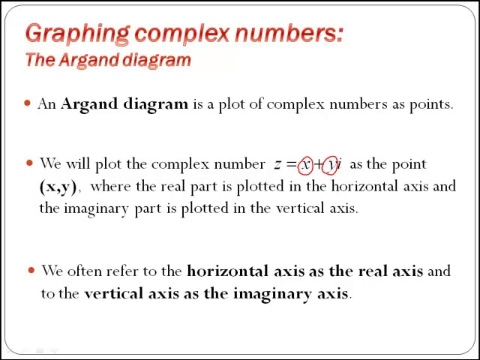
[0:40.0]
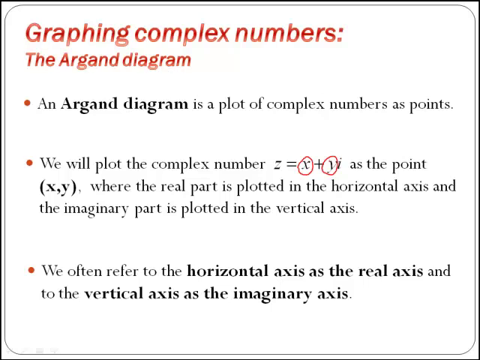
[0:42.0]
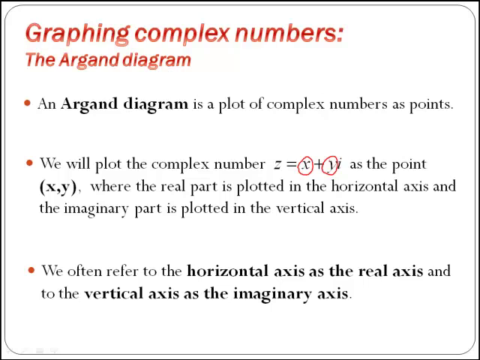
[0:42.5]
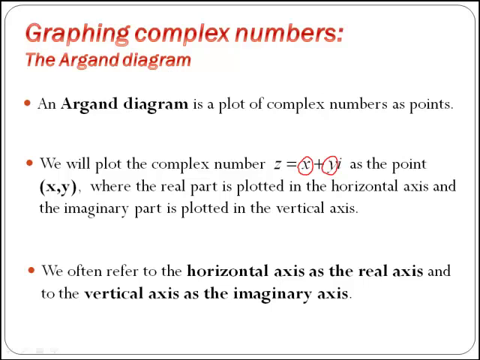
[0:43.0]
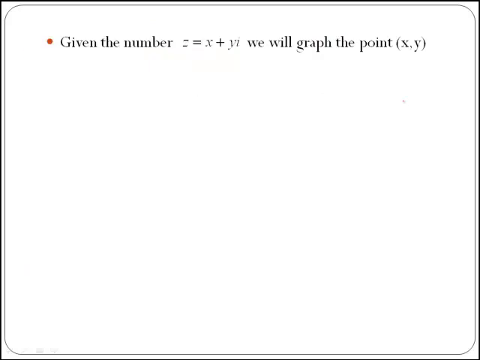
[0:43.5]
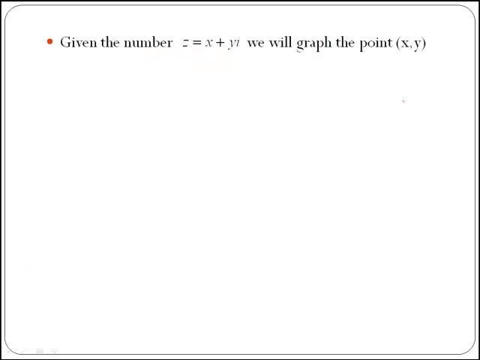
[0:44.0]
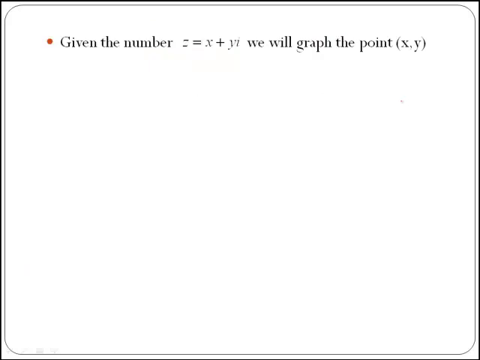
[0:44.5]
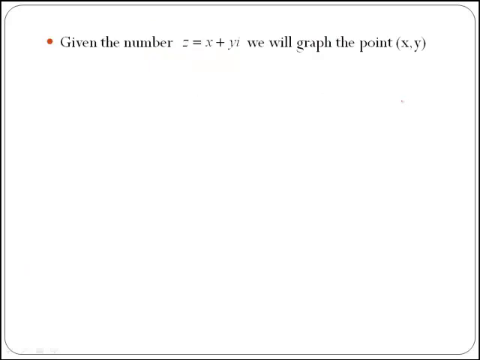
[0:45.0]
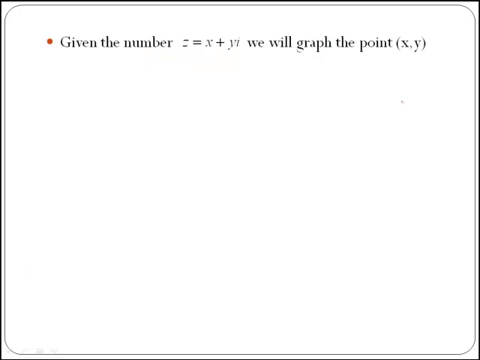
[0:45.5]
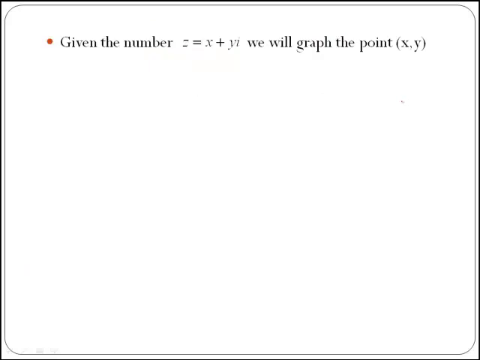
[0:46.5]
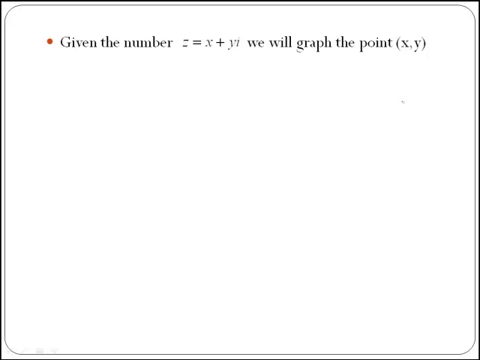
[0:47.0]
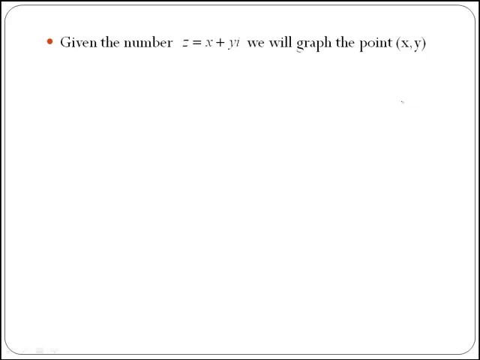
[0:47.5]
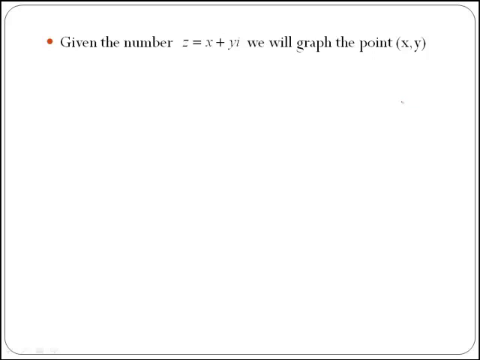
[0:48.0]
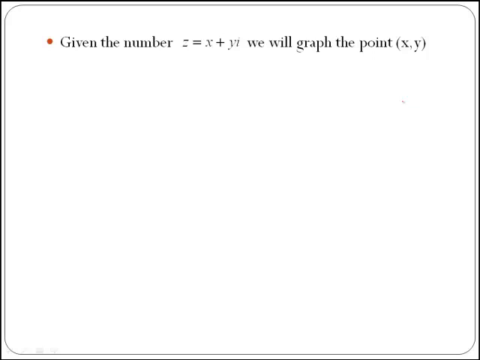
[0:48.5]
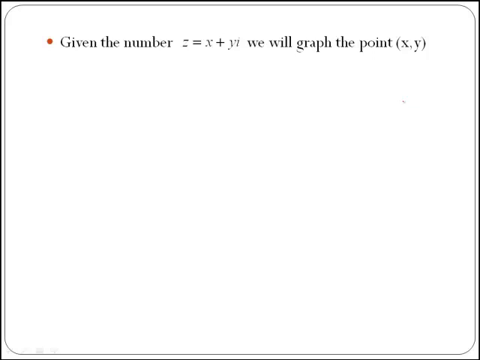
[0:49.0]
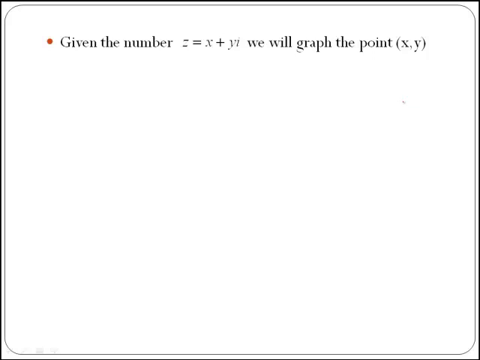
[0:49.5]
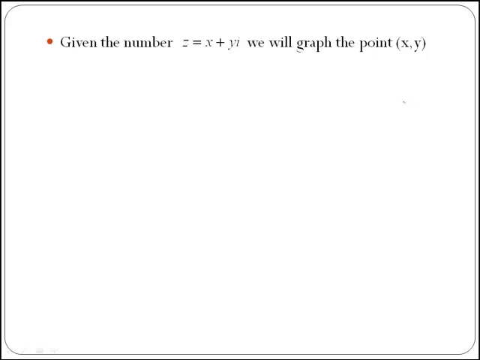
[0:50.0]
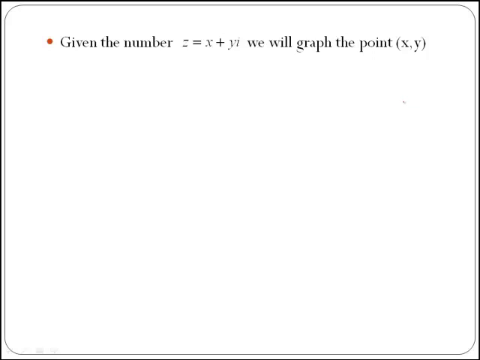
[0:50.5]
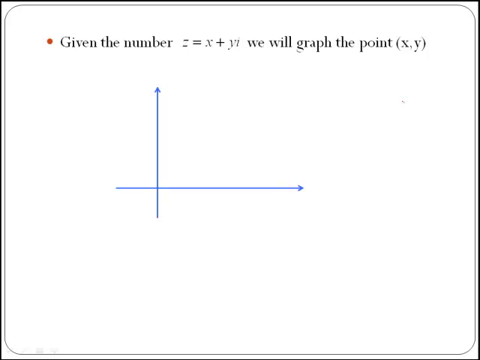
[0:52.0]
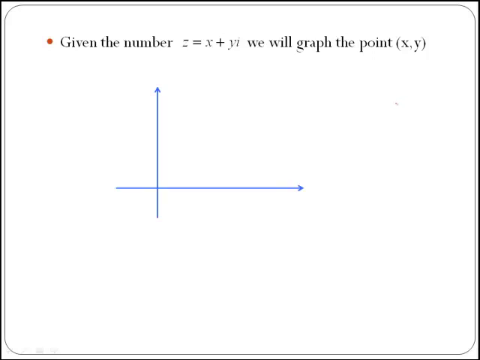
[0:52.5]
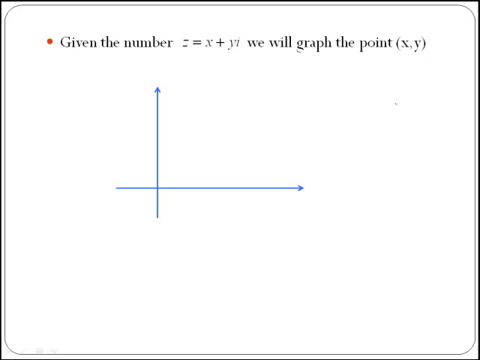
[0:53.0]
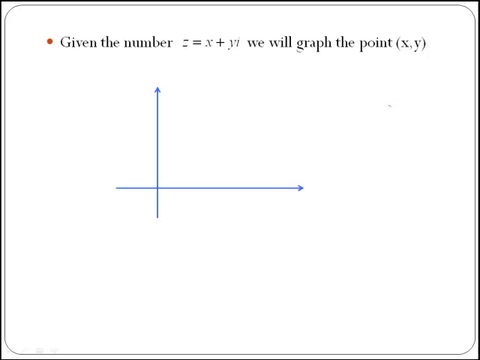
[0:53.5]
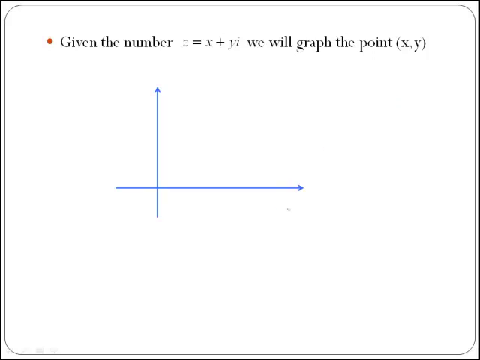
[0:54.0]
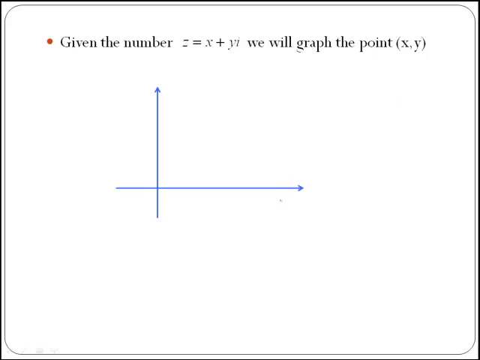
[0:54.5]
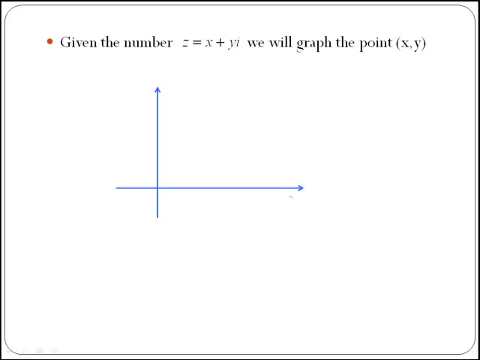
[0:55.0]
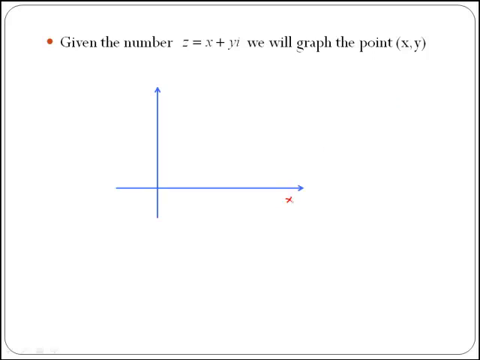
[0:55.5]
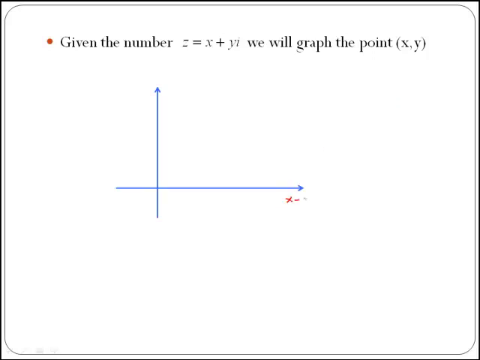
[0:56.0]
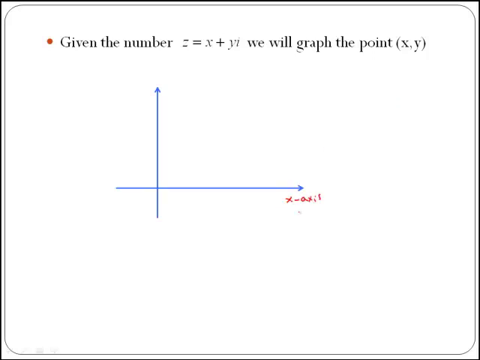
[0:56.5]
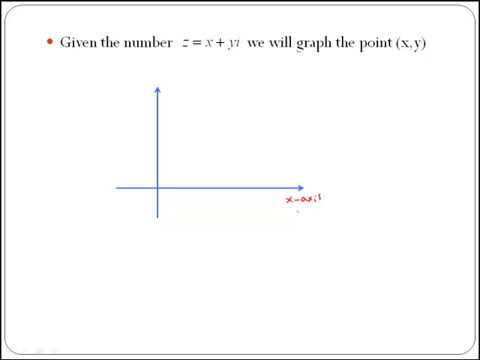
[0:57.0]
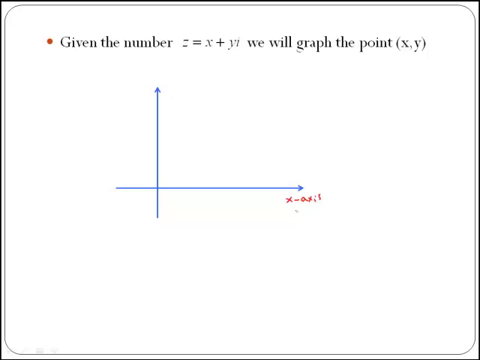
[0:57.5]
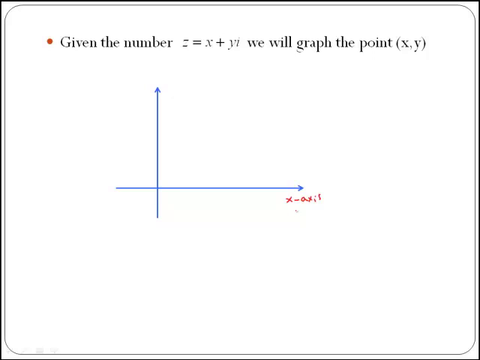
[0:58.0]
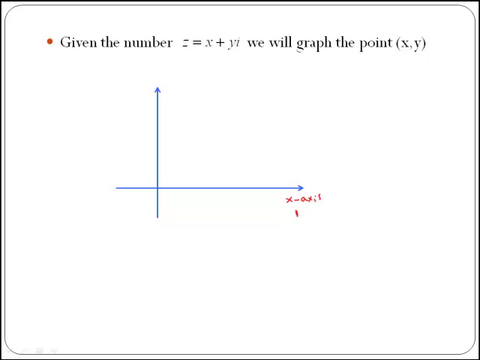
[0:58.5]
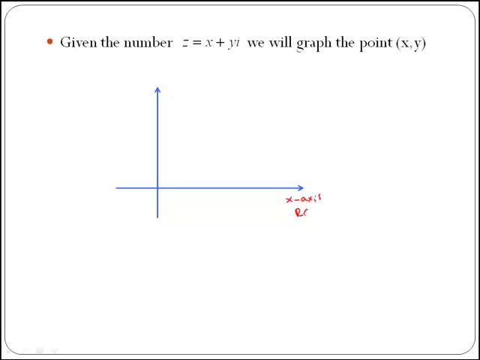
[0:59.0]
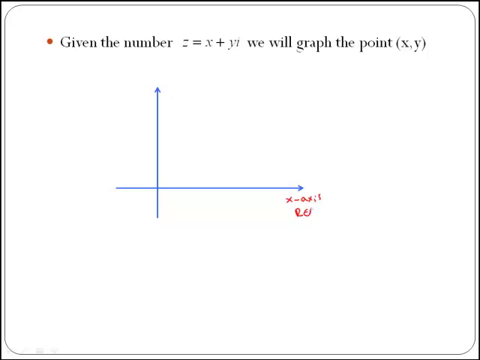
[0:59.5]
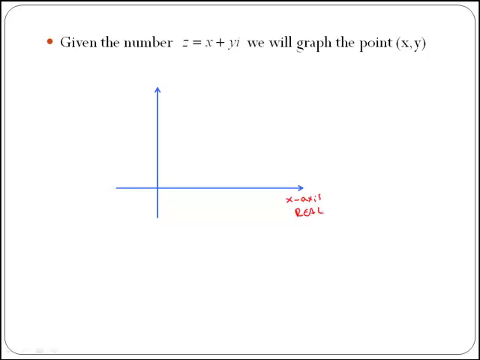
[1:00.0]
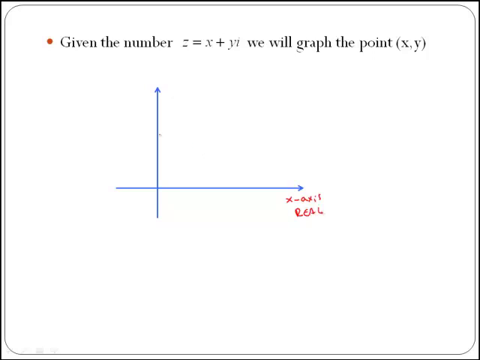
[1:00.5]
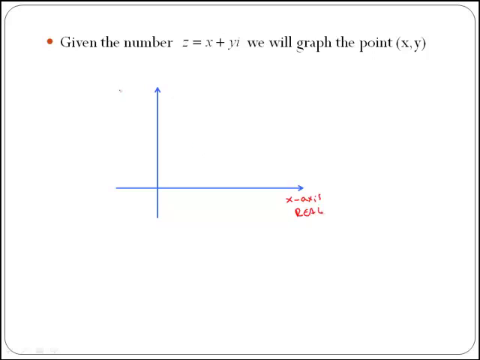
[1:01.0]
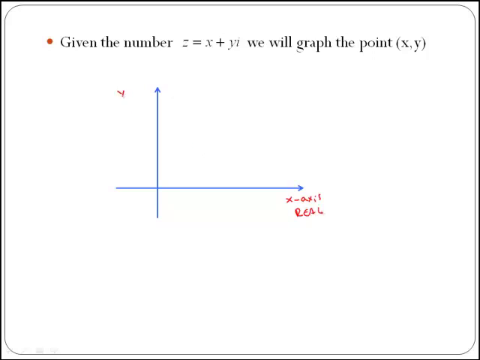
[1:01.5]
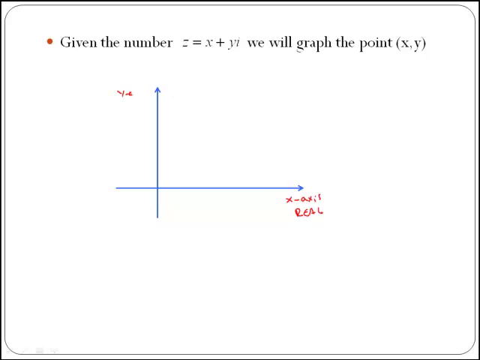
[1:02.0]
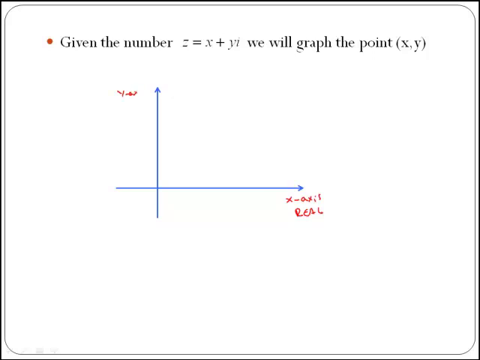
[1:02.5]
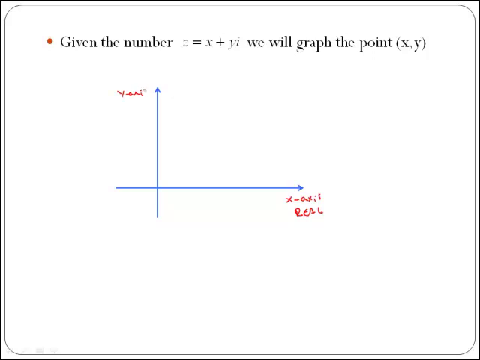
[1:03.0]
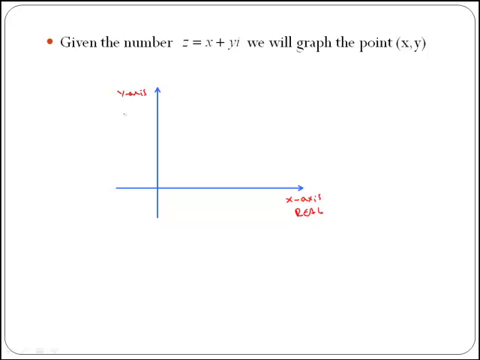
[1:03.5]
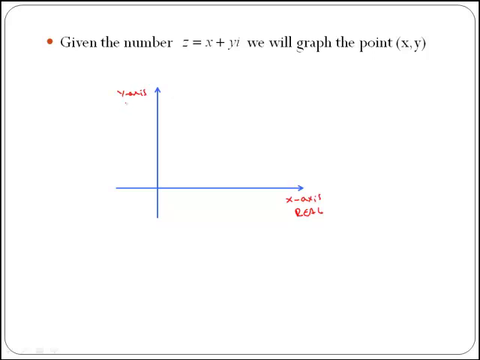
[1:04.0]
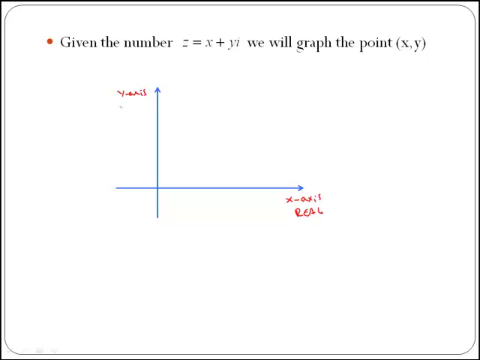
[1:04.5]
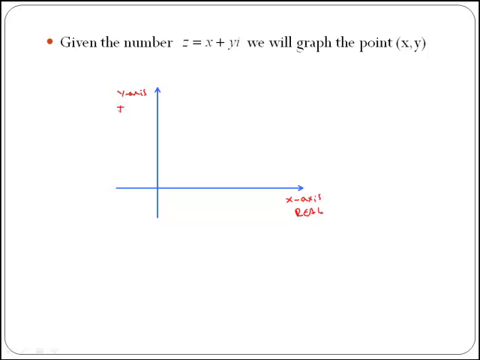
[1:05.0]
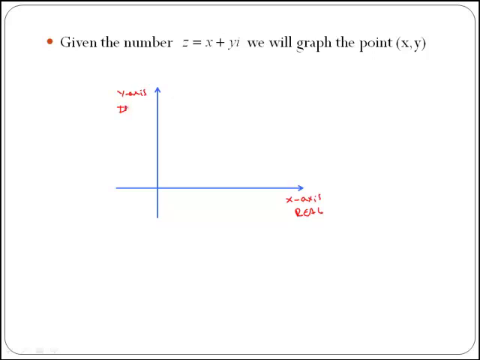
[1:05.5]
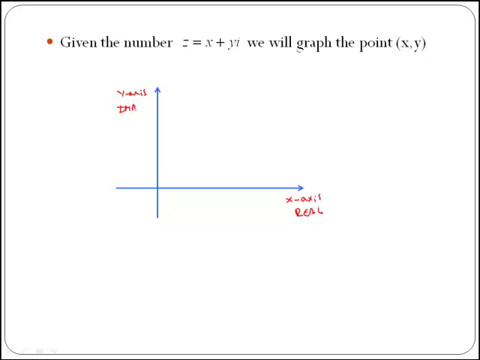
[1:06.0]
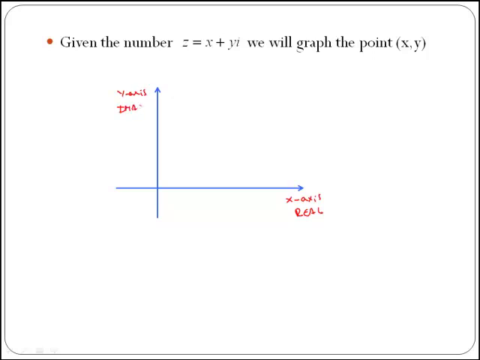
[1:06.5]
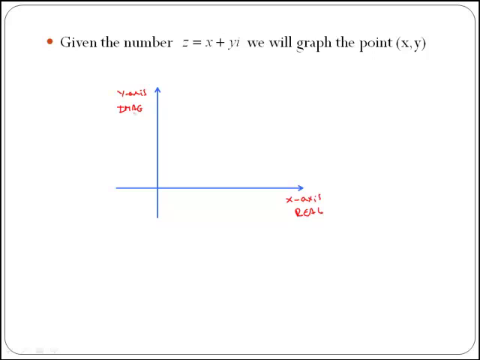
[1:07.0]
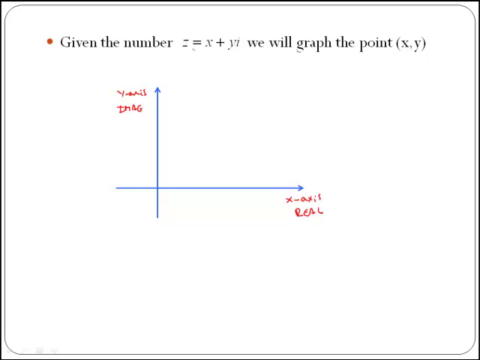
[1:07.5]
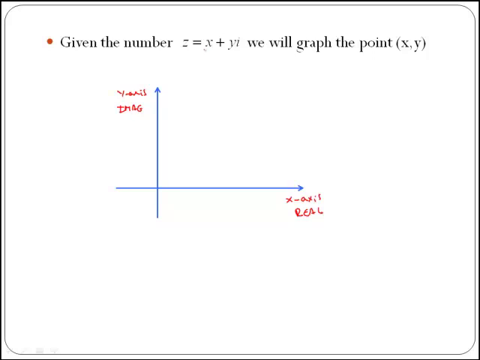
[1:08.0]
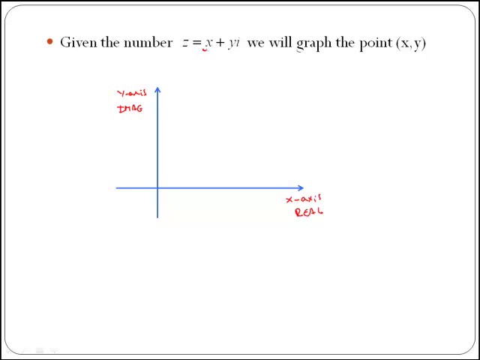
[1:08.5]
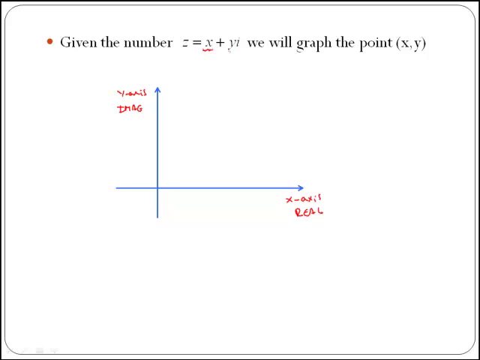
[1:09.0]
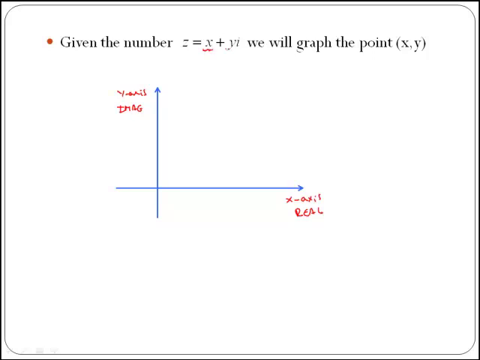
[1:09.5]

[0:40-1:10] The white slide with a gray border and large bold red title about the Aragon diagram shows its three bullet points: the Aragon diagram representing complex numbers, the bullet about the horizontal and vertical axes and the formula with x and y, and the bullet about referring to the horizontal axis as real and the vertical as imaginary. It stays on screen for a few seconds, then the next slide appears with a bullet point returning to the formula z = x + yi and graphing the point. A graph in blue then appears, showing a horizontal axis and a vertical axis. The presenter writes in red as if with a pen; the writing on the horizontal axis seems to involve x but is not clear. A y is written on the vertical axis. At the end, a squiggly line is drawn under the x.